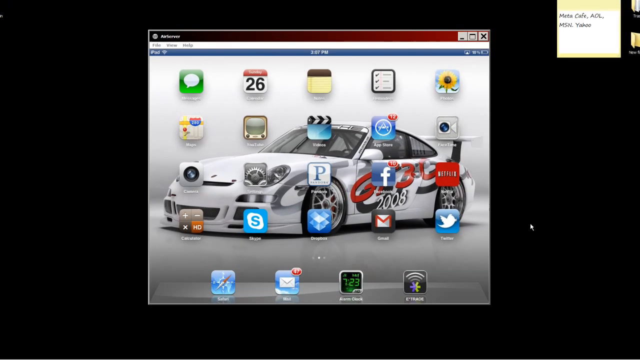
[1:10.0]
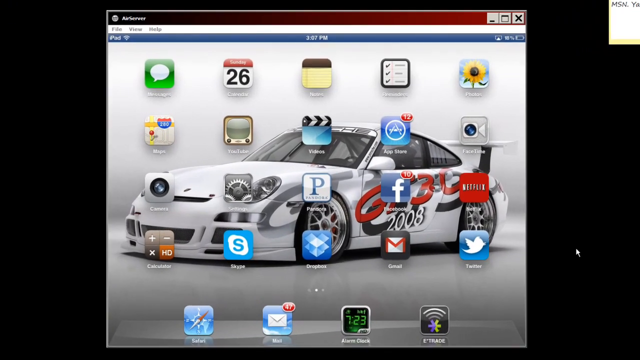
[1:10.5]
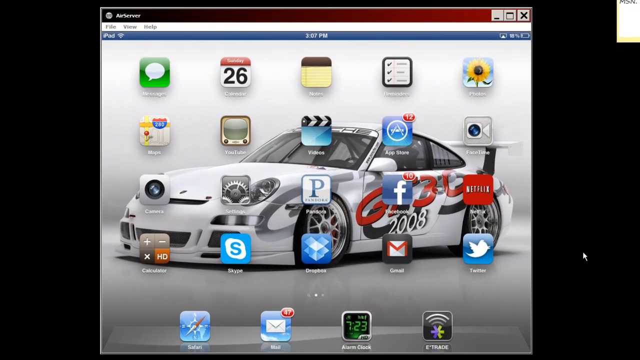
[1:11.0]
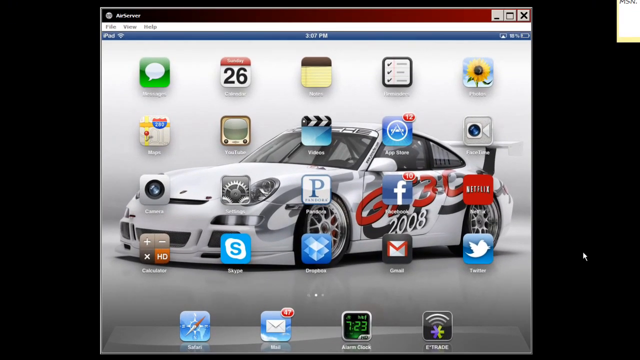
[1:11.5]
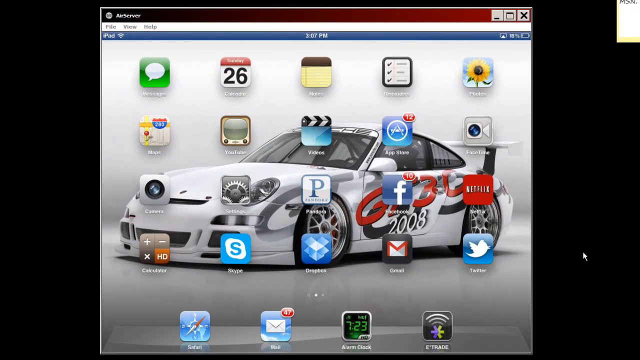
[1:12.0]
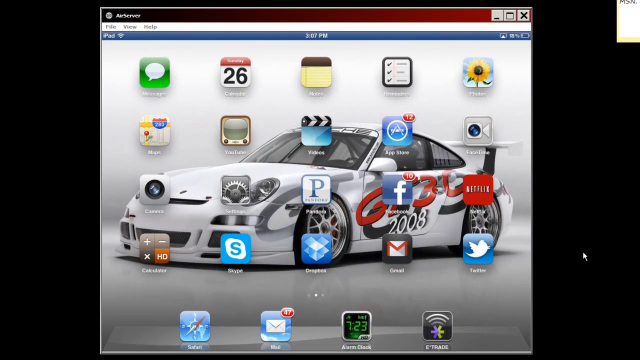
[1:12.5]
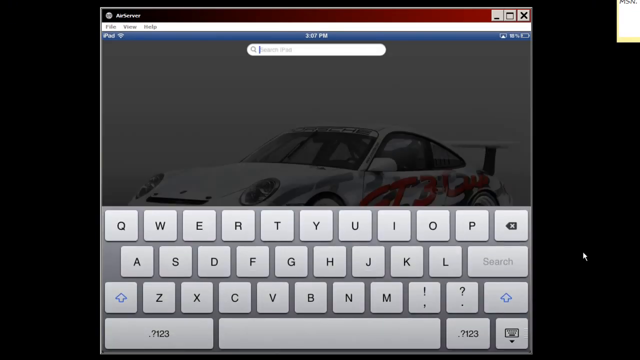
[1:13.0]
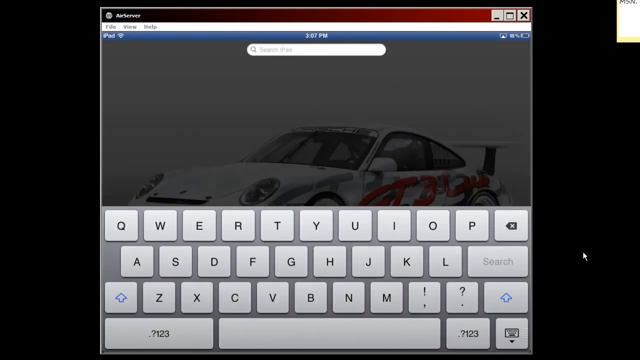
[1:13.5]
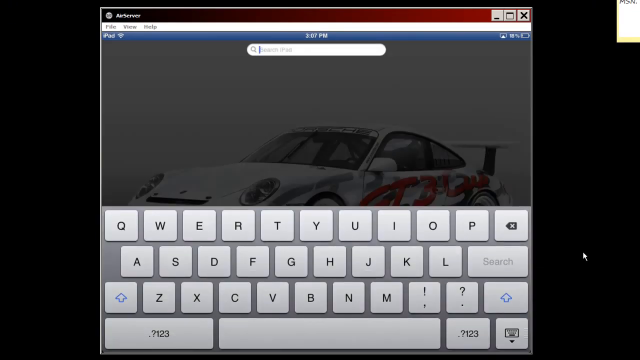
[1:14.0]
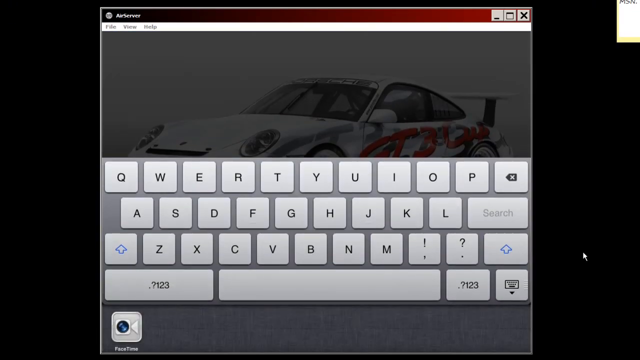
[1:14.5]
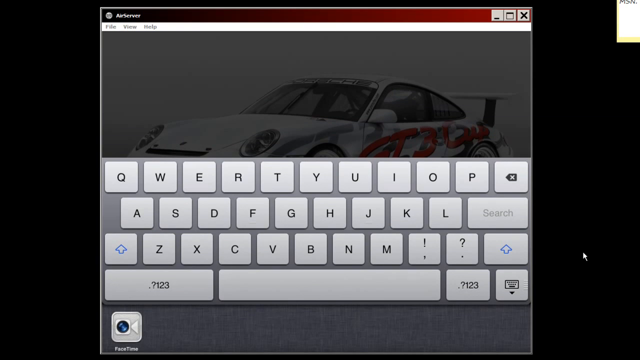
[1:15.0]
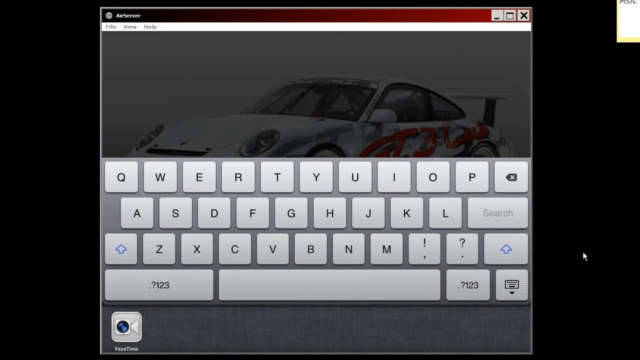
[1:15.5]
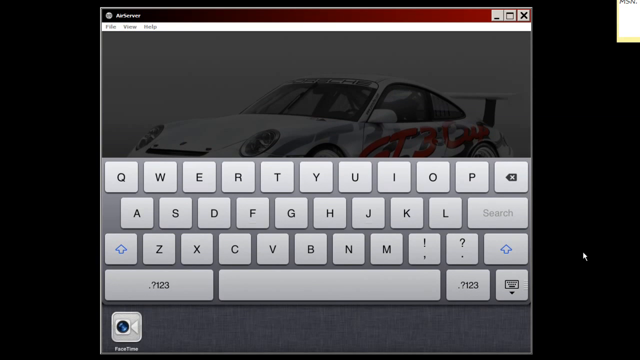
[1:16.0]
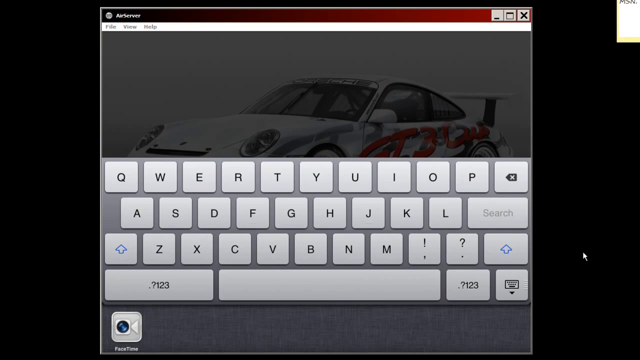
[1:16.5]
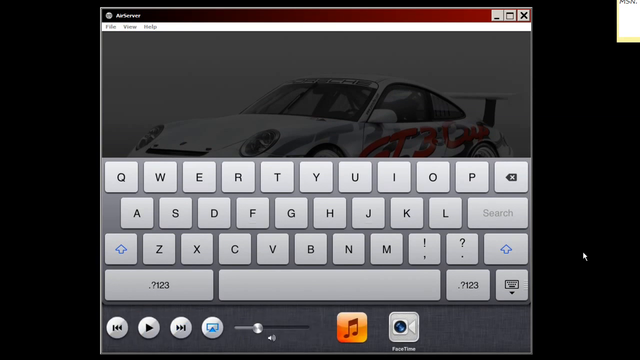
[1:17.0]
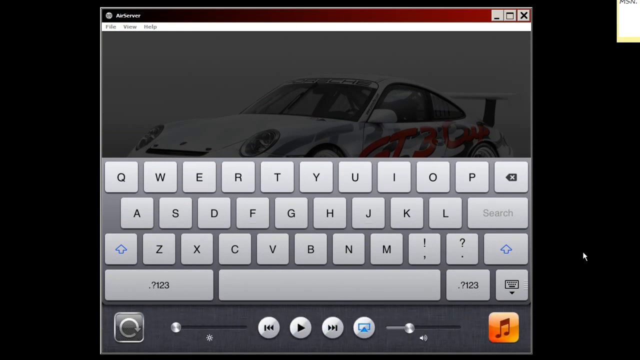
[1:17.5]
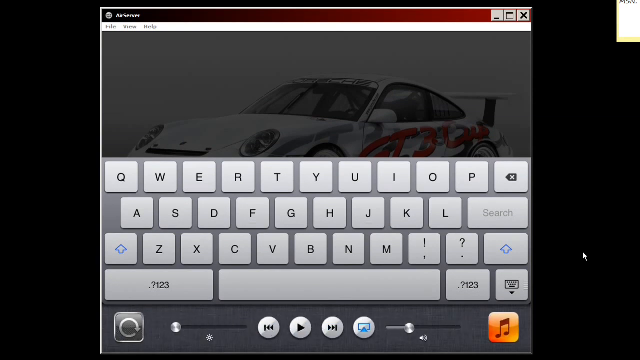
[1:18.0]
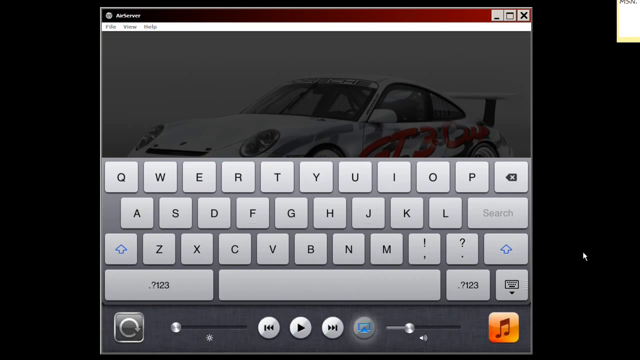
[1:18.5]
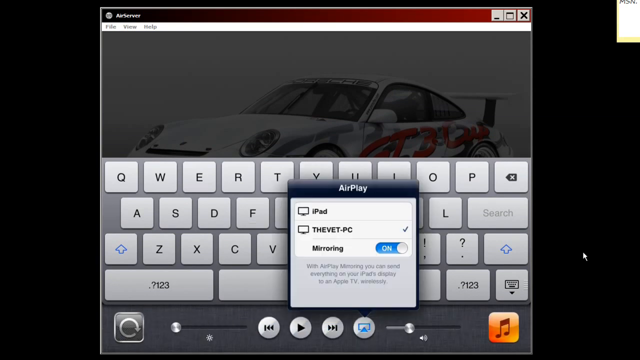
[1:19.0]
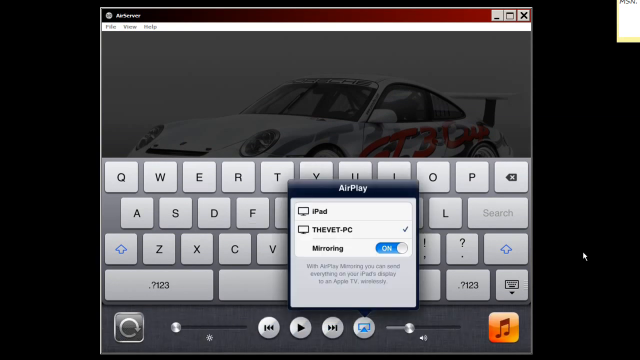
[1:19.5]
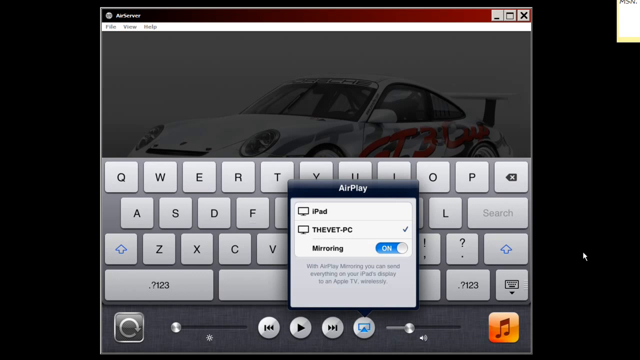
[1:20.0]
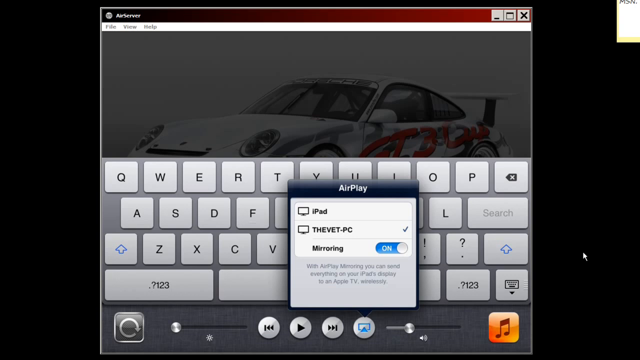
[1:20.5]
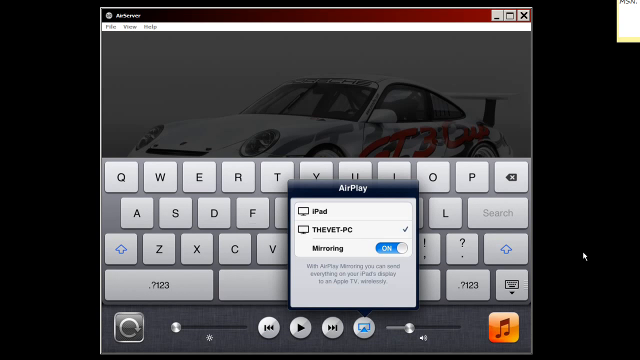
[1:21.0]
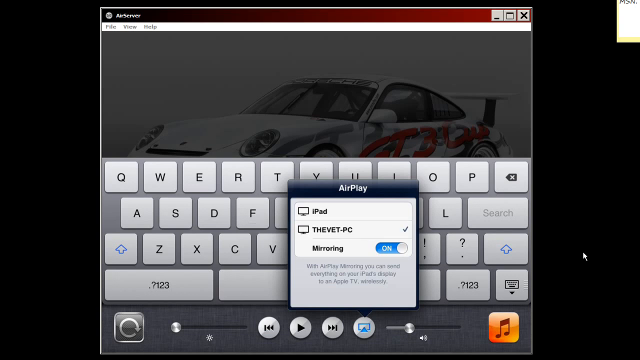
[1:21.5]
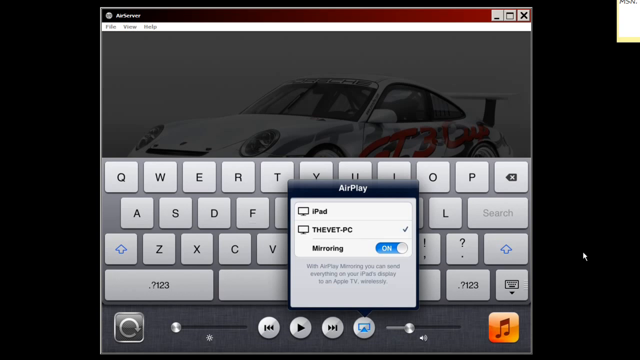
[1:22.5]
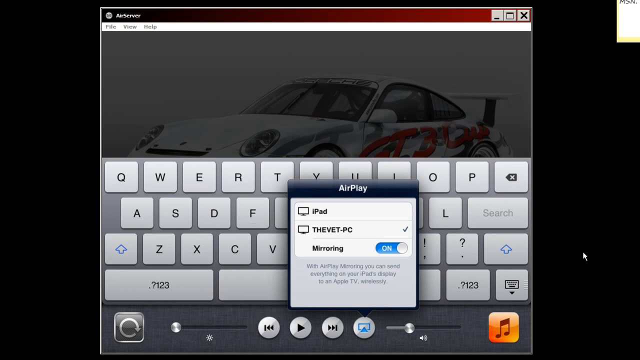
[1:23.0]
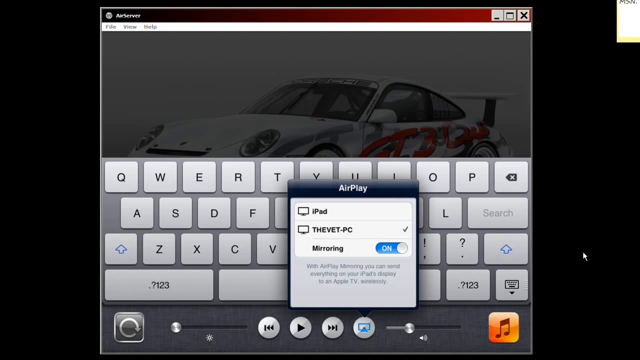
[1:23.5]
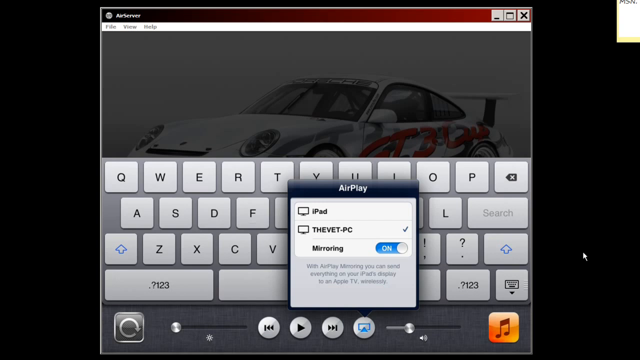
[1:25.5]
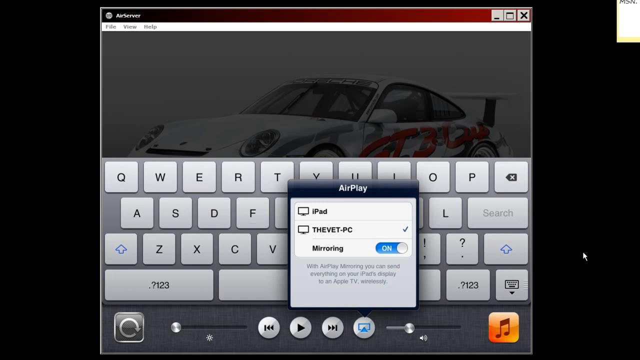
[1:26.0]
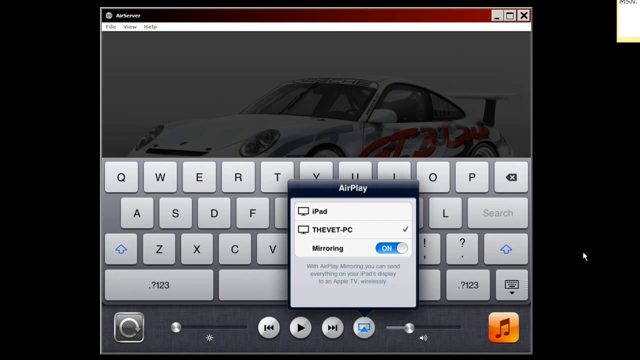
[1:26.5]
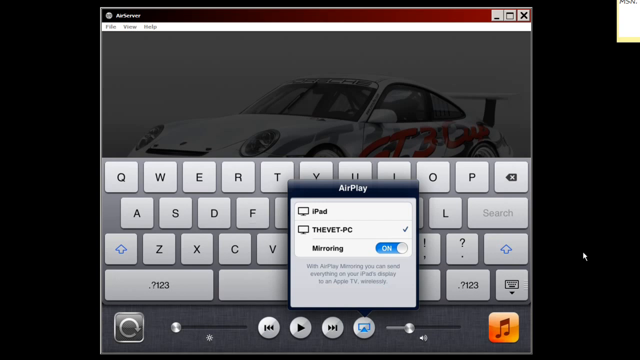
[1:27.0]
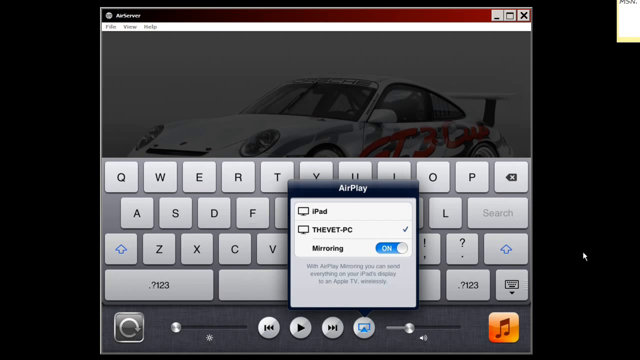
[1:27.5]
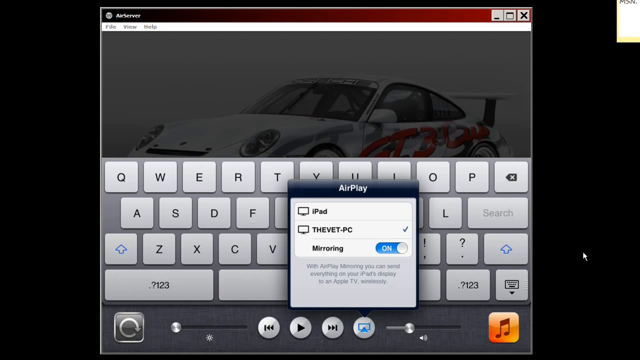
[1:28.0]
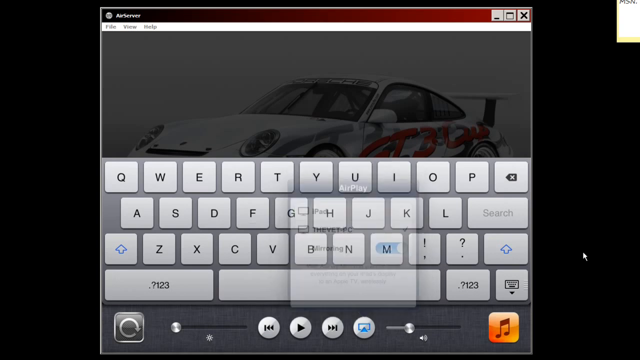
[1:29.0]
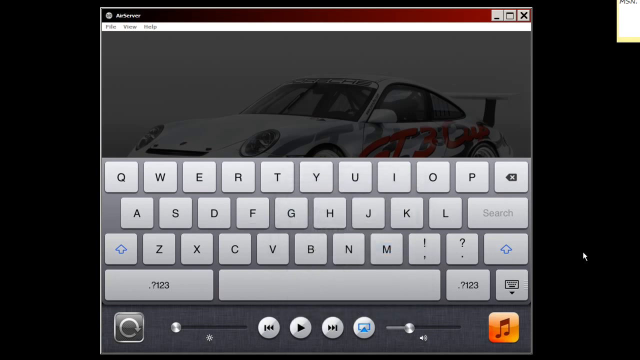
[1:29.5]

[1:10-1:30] A slightly zoomed-in view shows the silver box on the black background, with the white sports car in the background and the iPad app icons in the middle of the screen. The bar at the top of the silver box reads "AirServer". The user brings up a search function on the iPad, and a keyboard appears on the bottom half of the screen. The user slides along underneath the keypad, where there is a number, a volume option, a play button and a small rectangular box; the user selects the box, which reads "AirPlay mirroring on", and then selects their PC. The option then fades away. It appears to demonstrate how to AirPlay an iPad's contents to a computer.